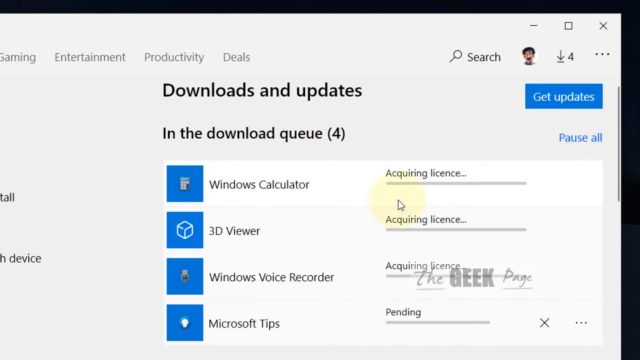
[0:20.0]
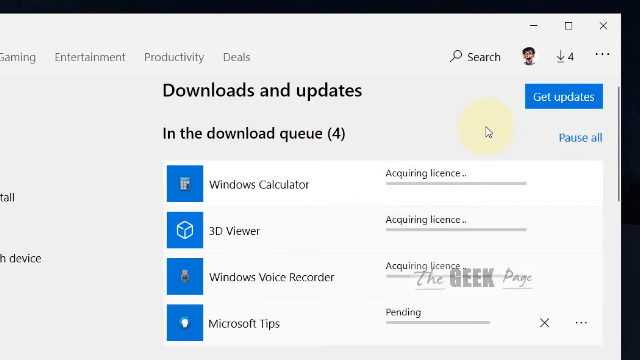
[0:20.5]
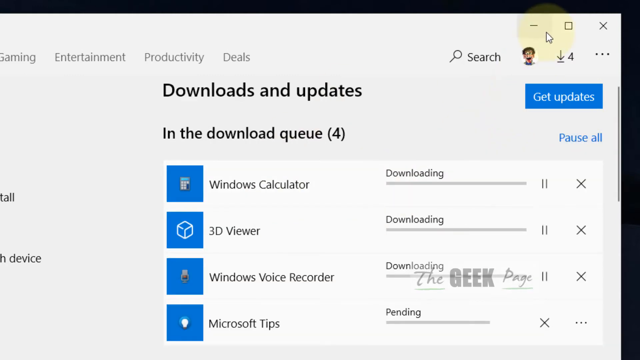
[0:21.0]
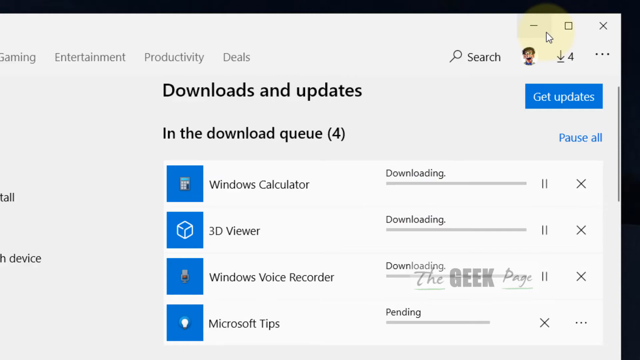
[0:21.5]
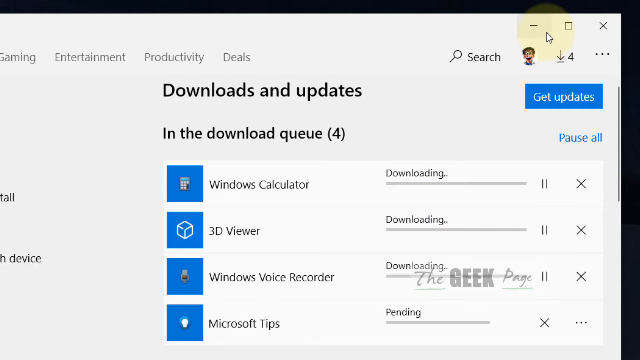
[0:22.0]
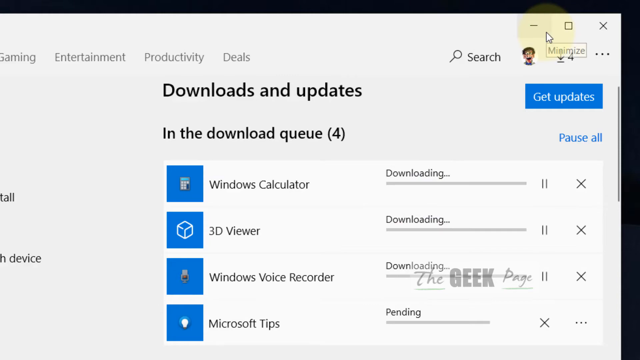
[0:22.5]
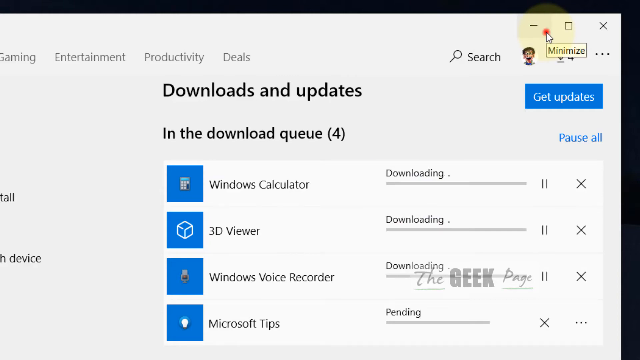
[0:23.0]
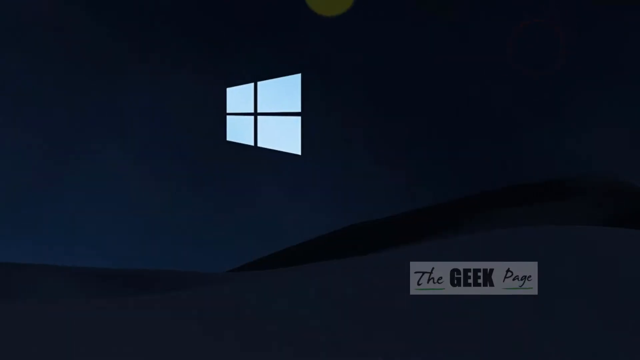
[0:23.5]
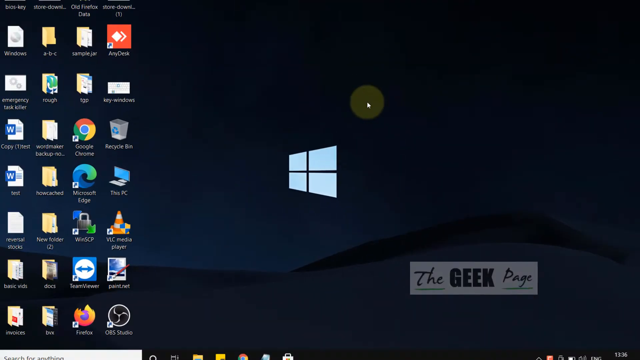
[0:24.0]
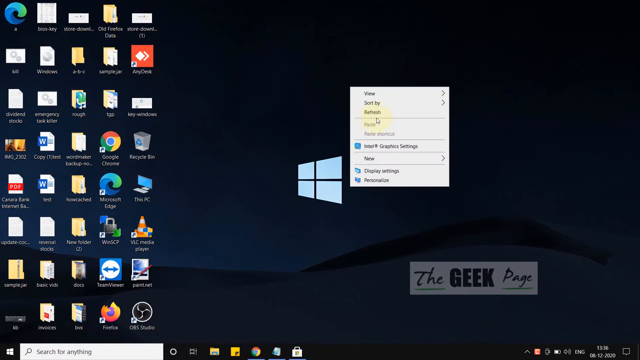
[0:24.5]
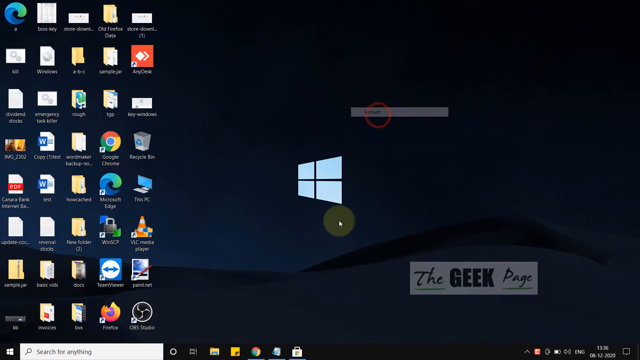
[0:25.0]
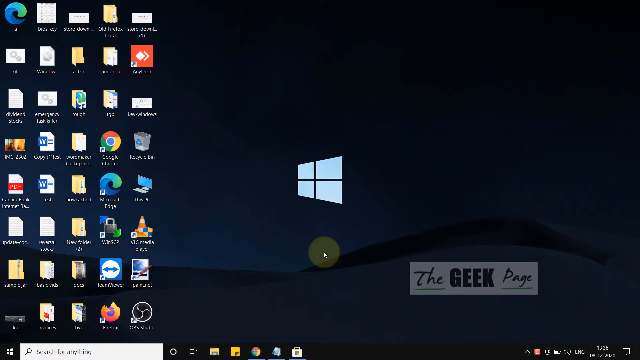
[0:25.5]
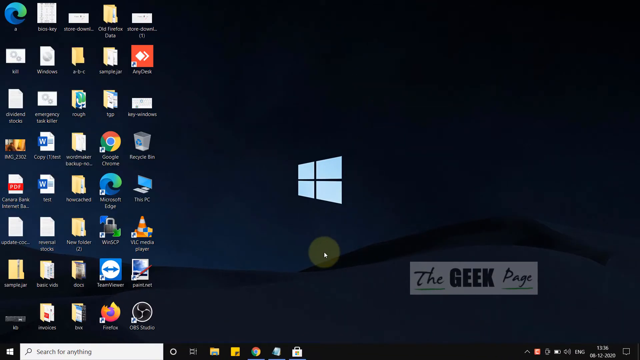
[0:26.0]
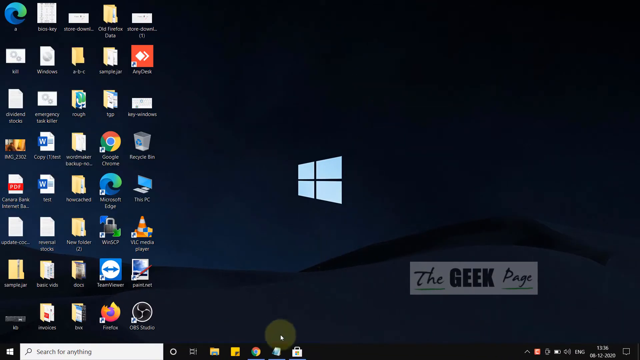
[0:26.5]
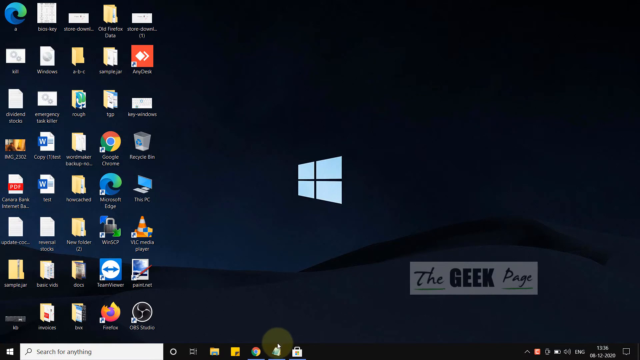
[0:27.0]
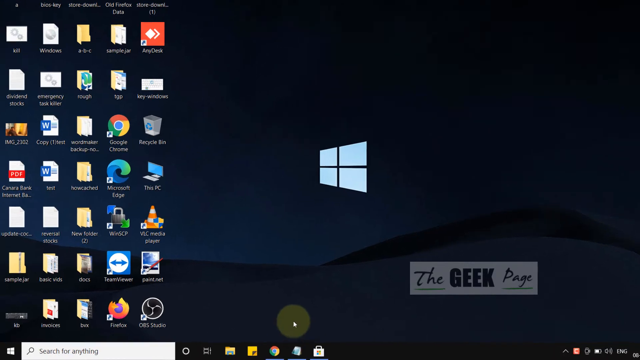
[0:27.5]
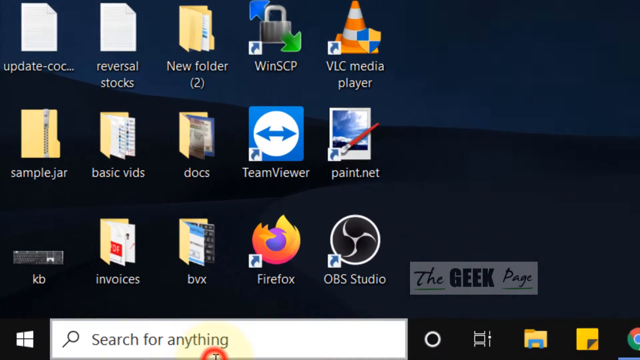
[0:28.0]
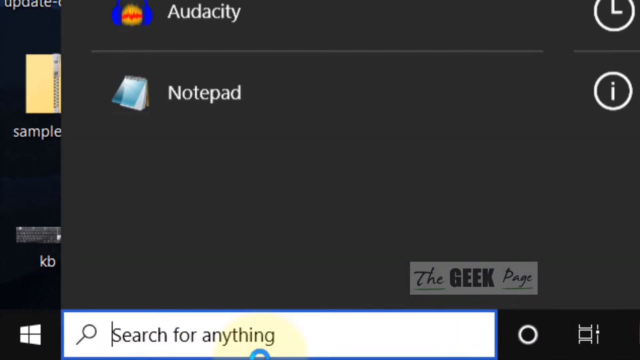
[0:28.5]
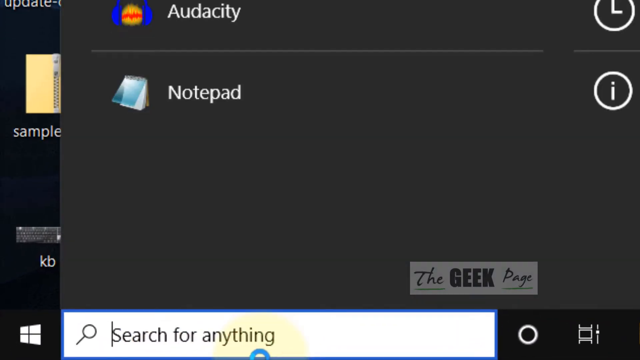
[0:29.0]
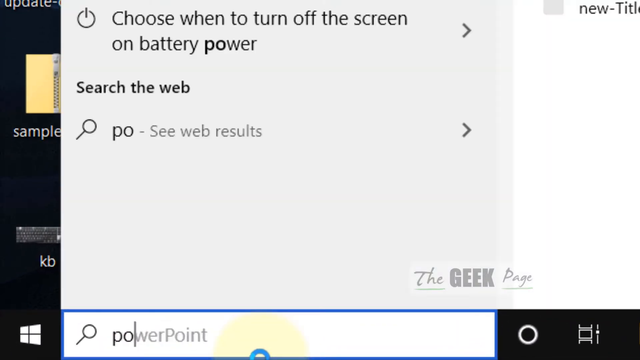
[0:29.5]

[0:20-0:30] A white page on a computer or laptop screen shows the words "Downloads and Updates" in the download queue, with the number four in parentheses. The available downloads are listed from top to bottom, each with a blue square button and a matching icon: Windows Calculator with a small calculator, 3D Viewer with a white cube, Windows Voice Recorder with a small microphone, and then Microsoft Tips. The mouse travels up to the upper right corner of the screen, where it reads "minimize", and clicks on it. Across the top of the screen, from left to right in gray text, it reads "gaming", "entertainment", "productivity" and "deals". The screen suddenly goes back to the home screen with the Windows logo. In the lower right corner it says "The Geek Page" against a white background, and on the left side are many icons for the computer's apps and elements, such as Word, with Microsoft Edge in the upper left.